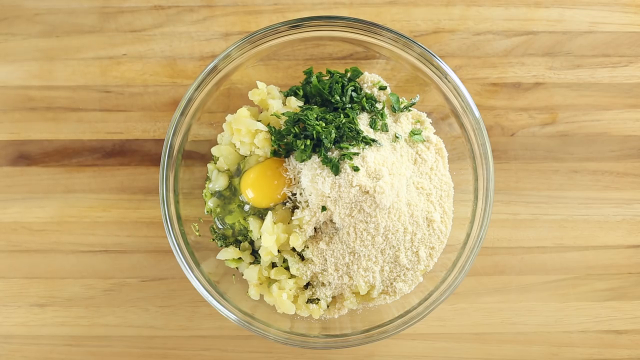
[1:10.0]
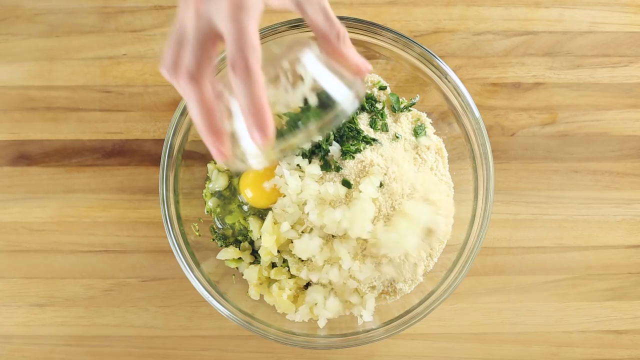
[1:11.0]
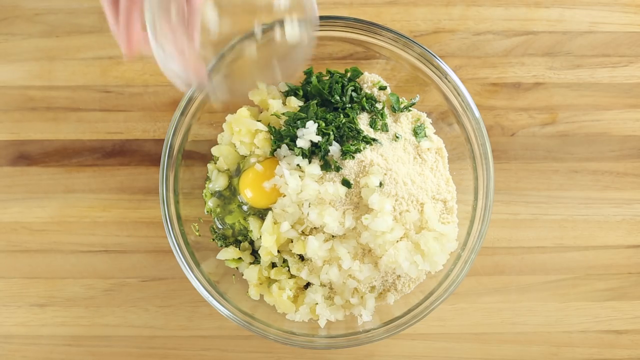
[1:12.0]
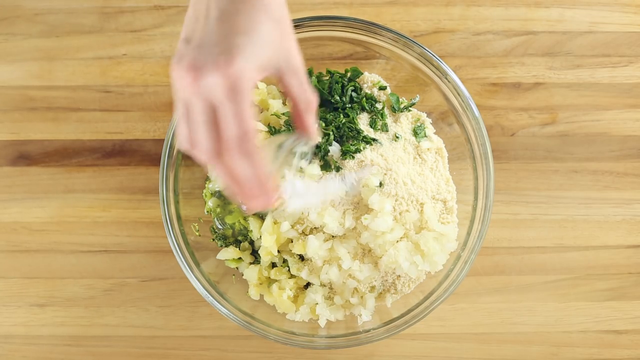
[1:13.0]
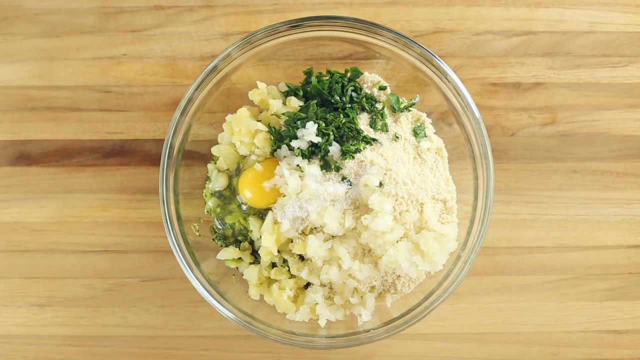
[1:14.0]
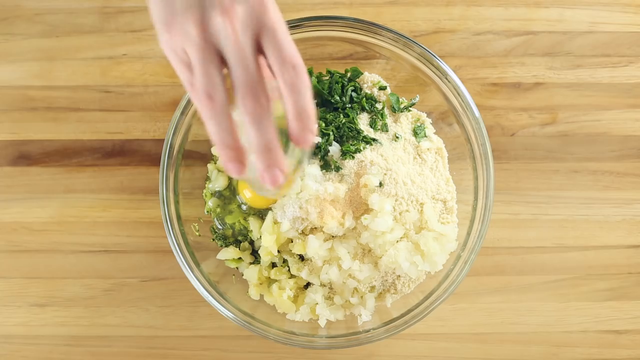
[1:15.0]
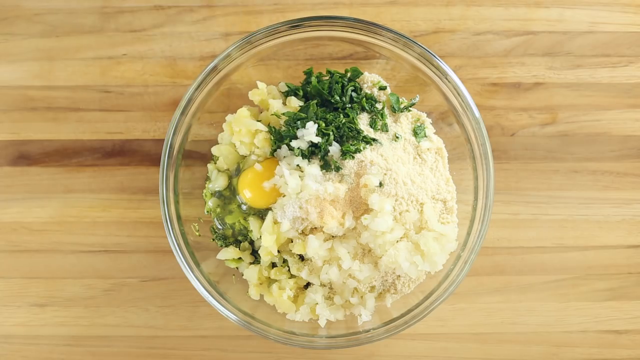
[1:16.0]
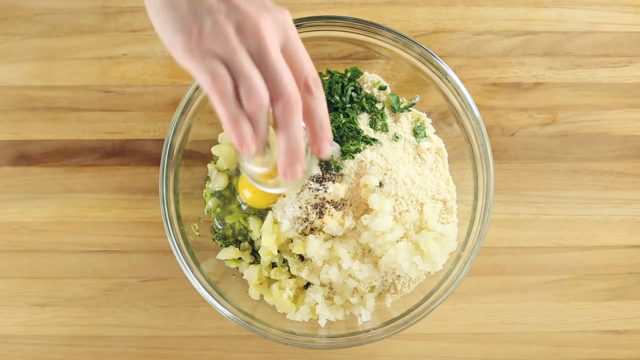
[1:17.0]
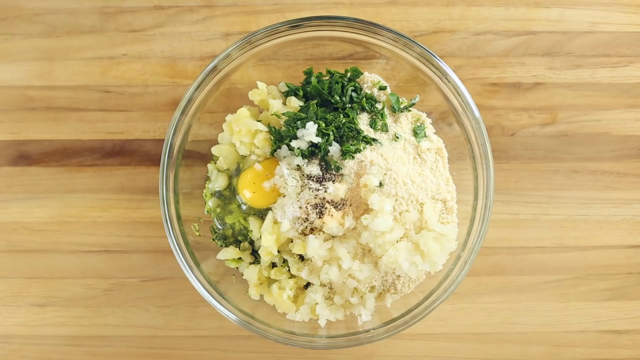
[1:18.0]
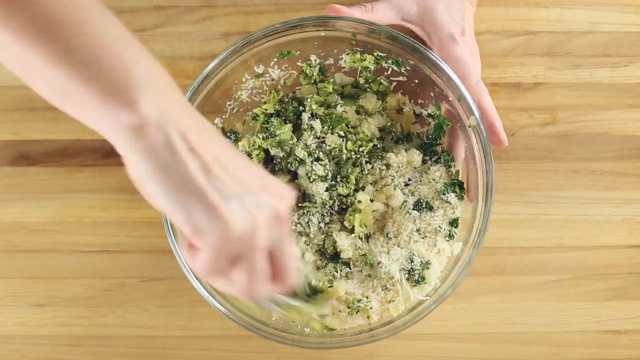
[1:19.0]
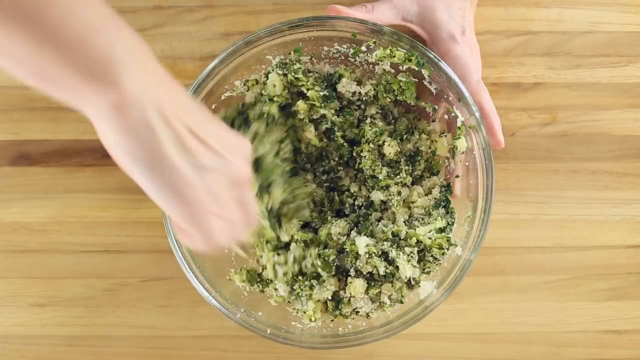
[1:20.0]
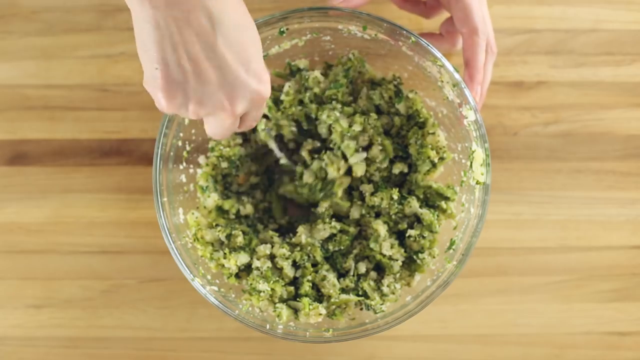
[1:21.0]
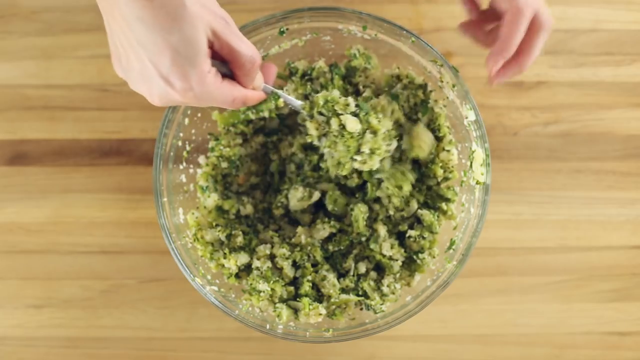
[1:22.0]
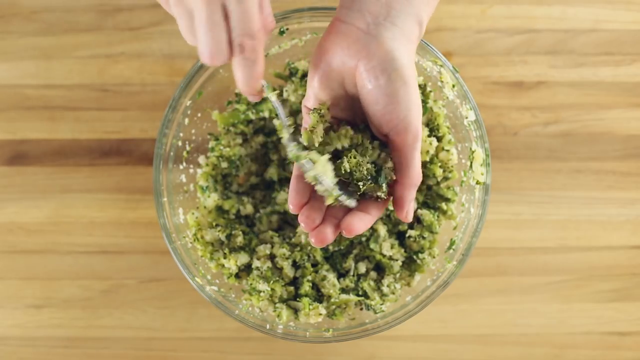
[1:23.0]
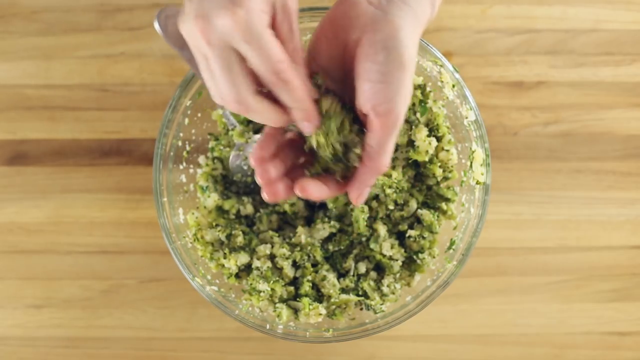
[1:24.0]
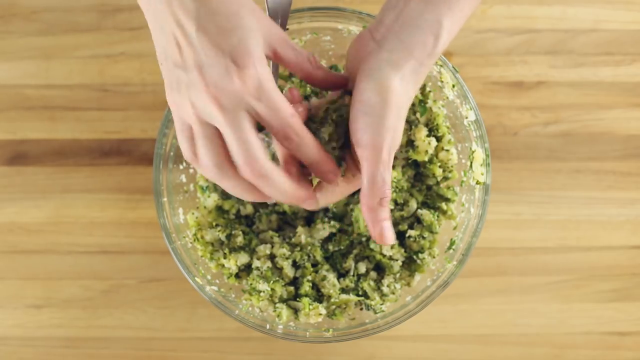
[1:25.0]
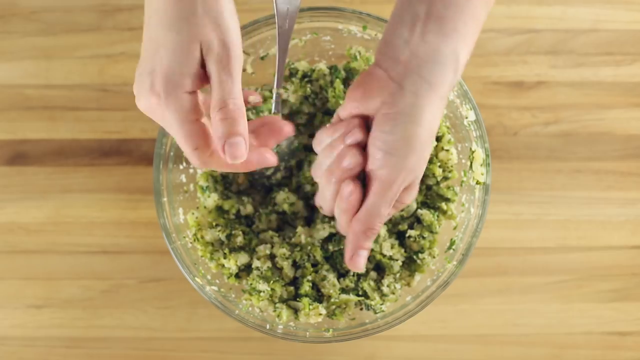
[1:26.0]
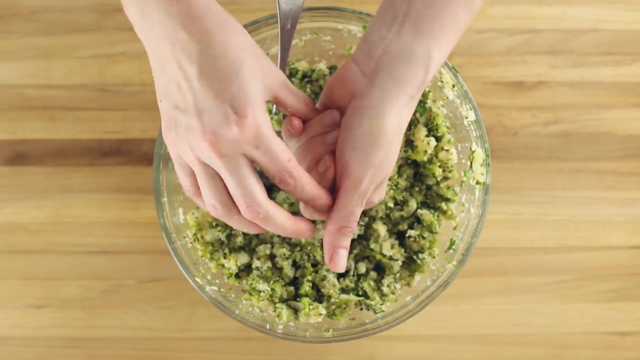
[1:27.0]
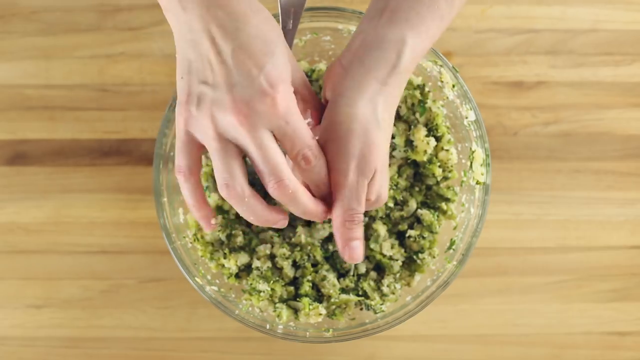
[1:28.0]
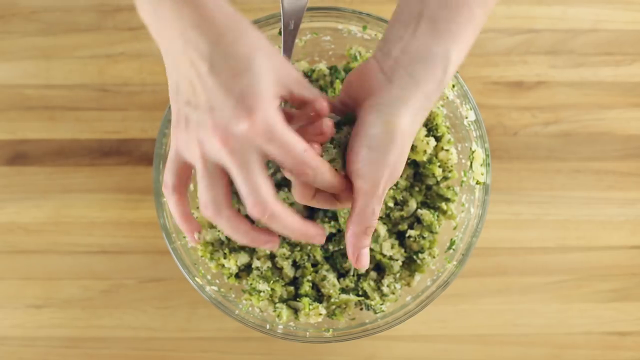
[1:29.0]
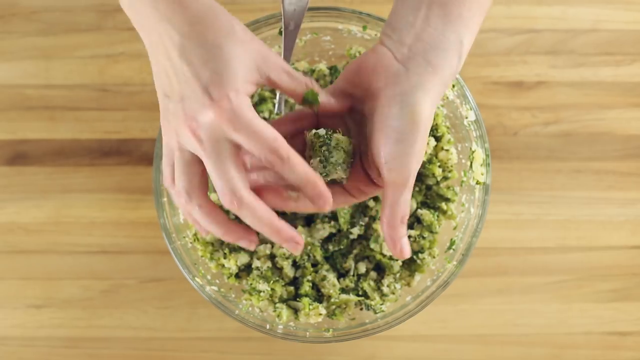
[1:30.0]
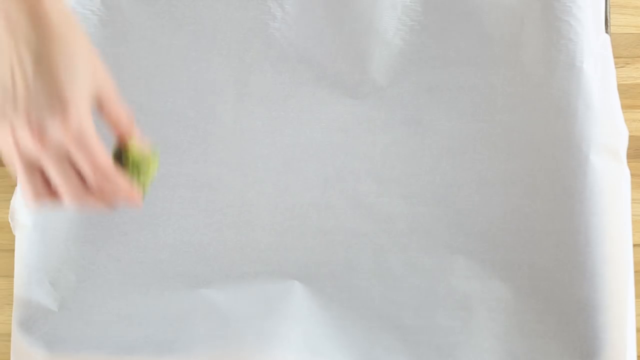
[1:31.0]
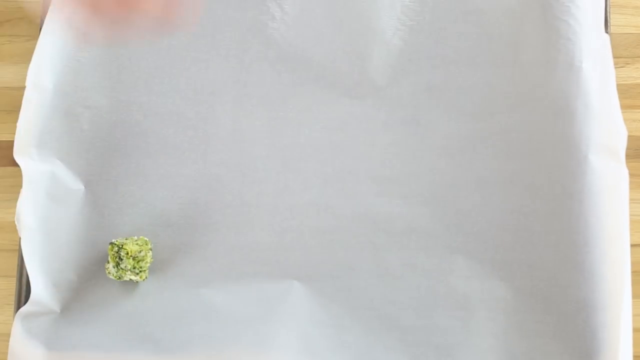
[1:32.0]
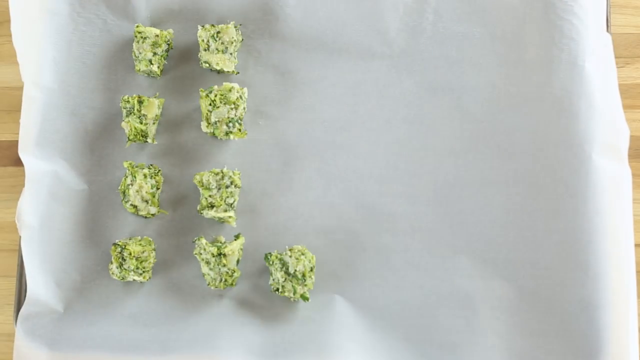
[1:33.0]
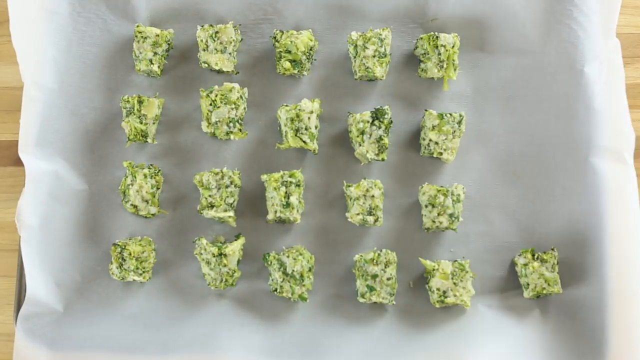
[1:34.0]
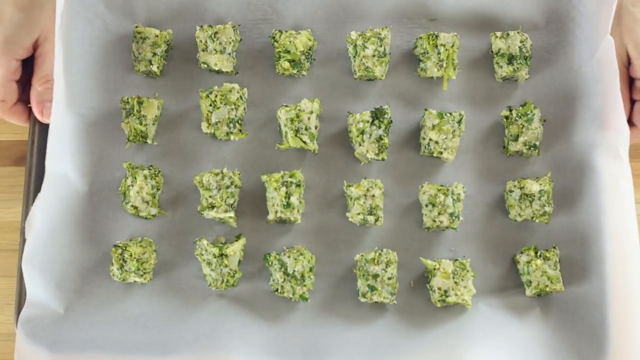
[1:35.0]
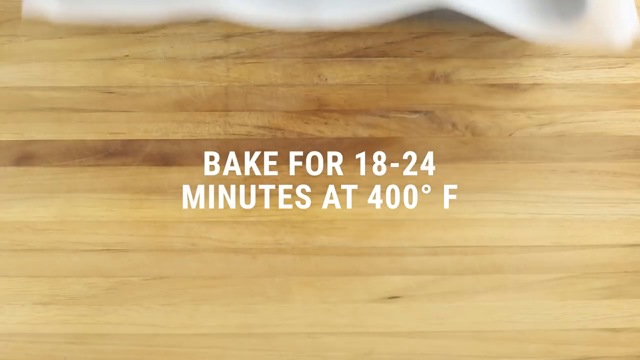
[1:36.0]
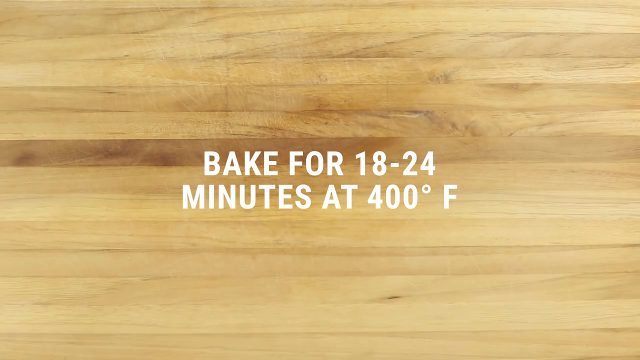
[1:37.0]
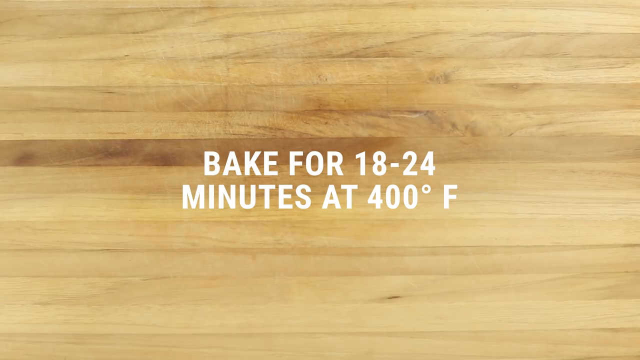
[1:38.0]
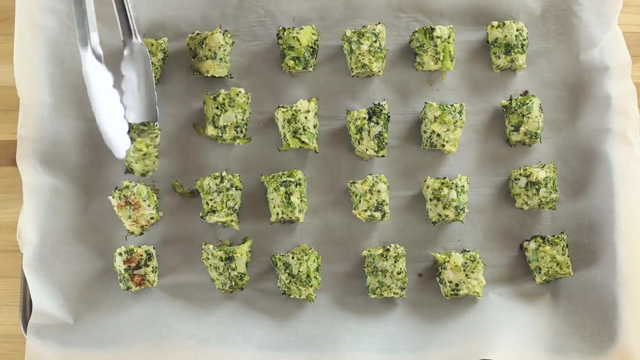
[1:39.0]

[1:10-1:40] Looking down into a large clear bowl on a light brown wooden table, chopped broccoli is visible at the bottom along with diced peeled potatoes, chopped greens, powdery cream-colored cheese and a raw egg. A hand comes from the top of the screen holding a small clear bowl of what looks like chopped yellow onions and dumps them in. They then take a smaller clear cup that looks like it is for sauces and drop a cup of salt into the bowl, add another tan-colored powdery seasoning on top, and drop in what looks like brown ground pepper. They mix all the contents with a spoon; the video is kind of sped up, so the mixing is very fast. After a few seconds the video slows down, and the mixture now has a light green color and a kind of mashed-potato-like texture. The hands take a spoonful, drop it into a palm, squeeze it, switch it to the other hand and squeeze again, passing it back and forth a few times, then form it into a square cube shape, which they kind of show to the camera when done. A close-up shows a silver cooking tray with white wax paper on it, where they arrange the little cubes into four rows of six tots each. They pull the tray off the table toward the top of the screen, and white text appears on the table reading "bake for 18 to 24 minutes at 400 degrees Fahrenheit." After a few seconds the video changes to the tray with the white wax paper and the rows of broccoli tots, and a pair of tongs begins flipping the tots over so they can cook on the other side; the undersides now have a little brown color.